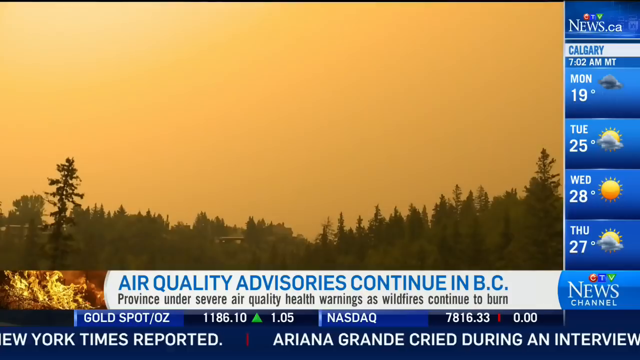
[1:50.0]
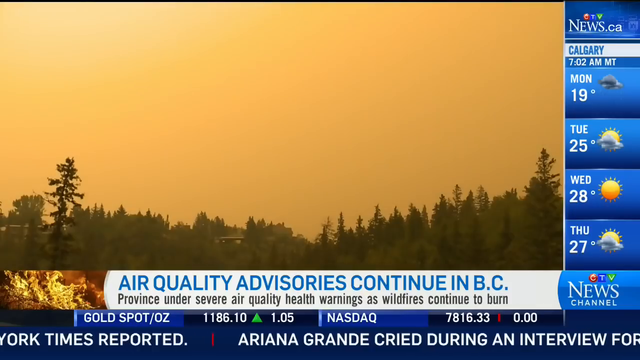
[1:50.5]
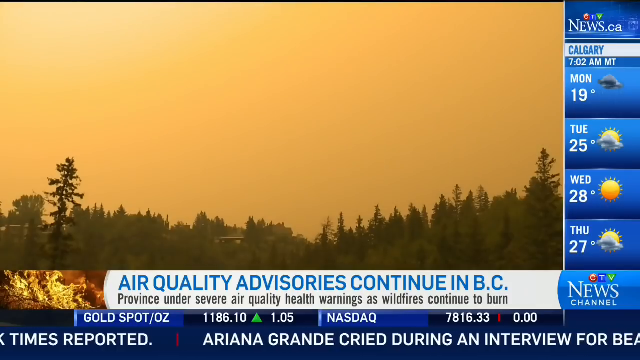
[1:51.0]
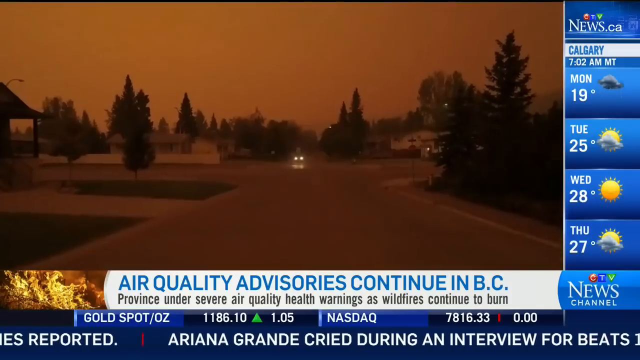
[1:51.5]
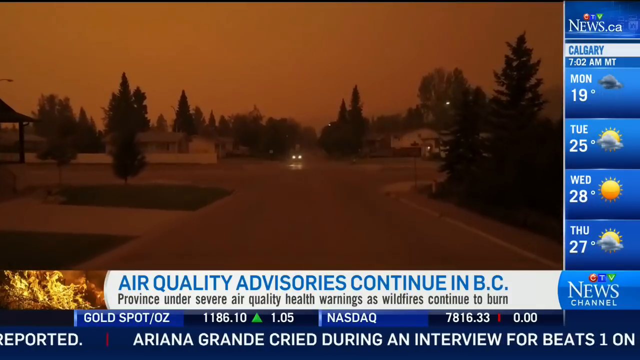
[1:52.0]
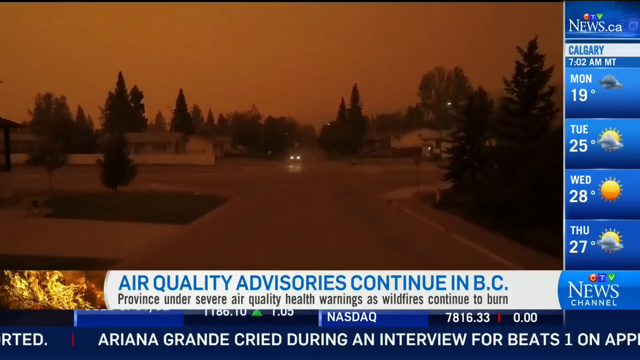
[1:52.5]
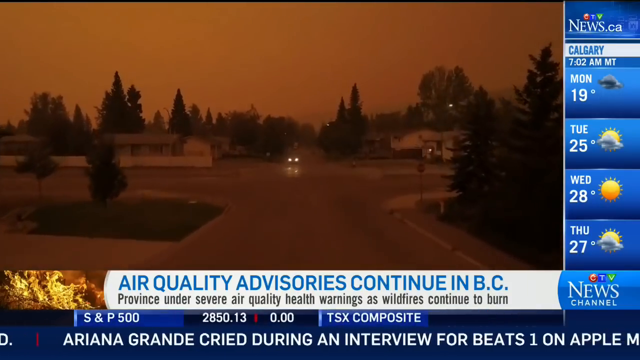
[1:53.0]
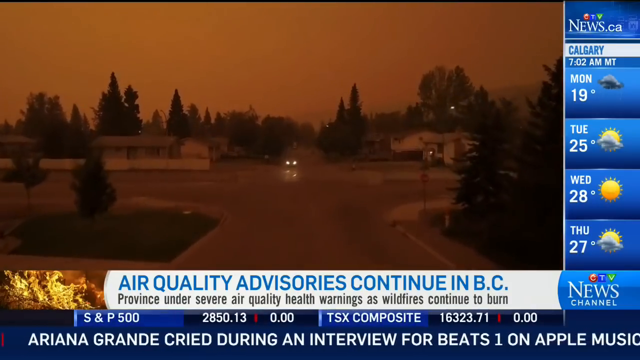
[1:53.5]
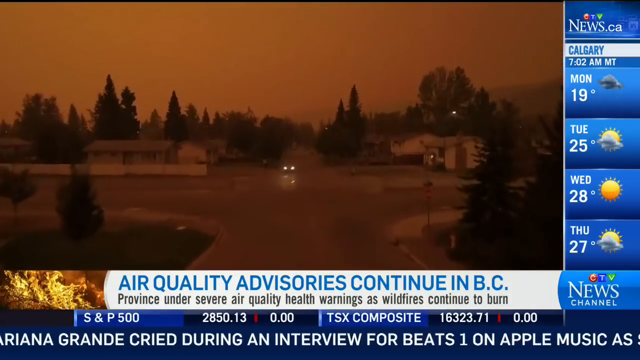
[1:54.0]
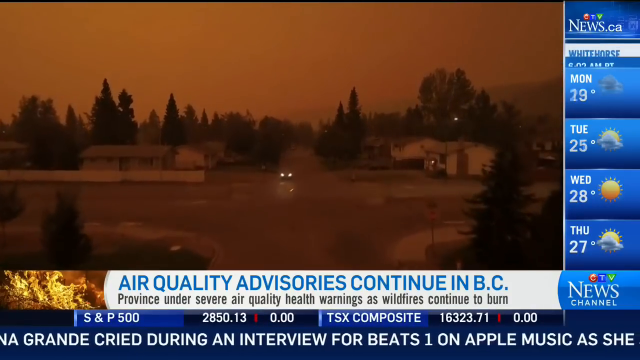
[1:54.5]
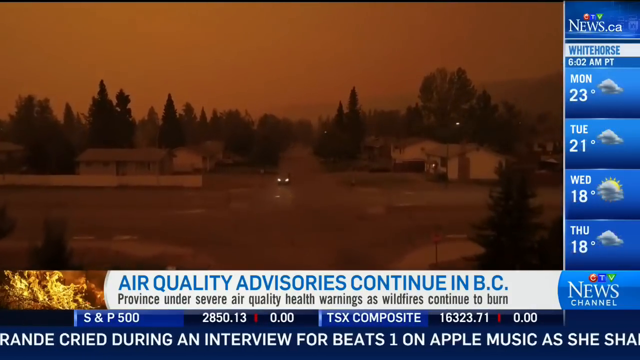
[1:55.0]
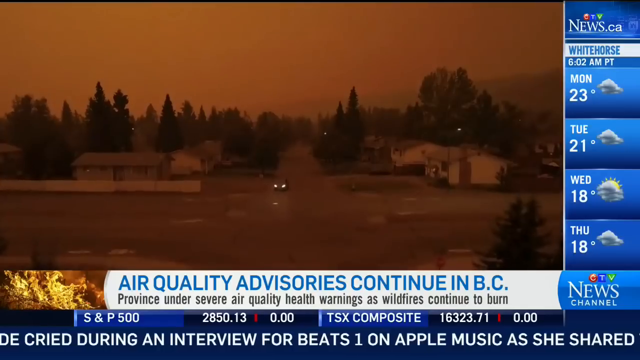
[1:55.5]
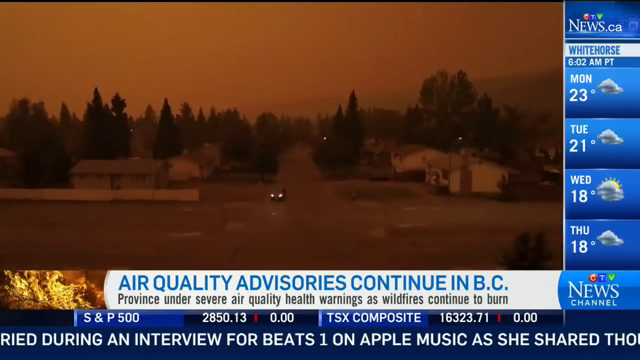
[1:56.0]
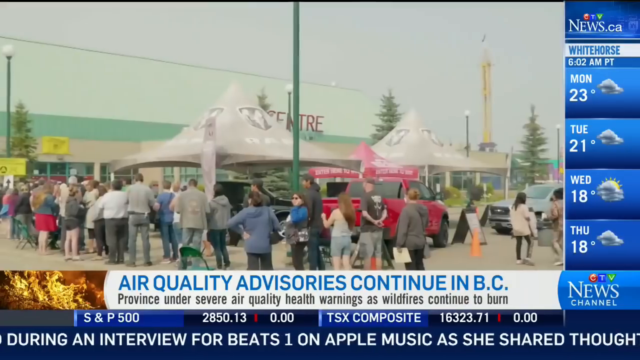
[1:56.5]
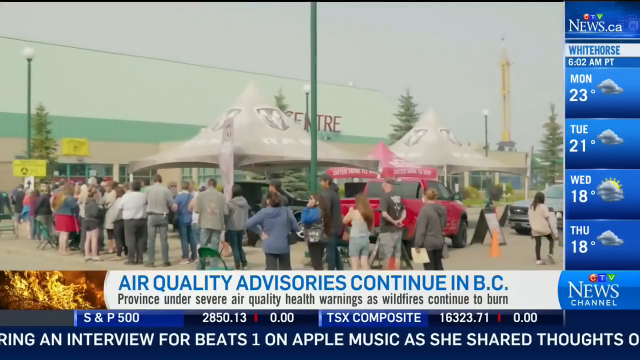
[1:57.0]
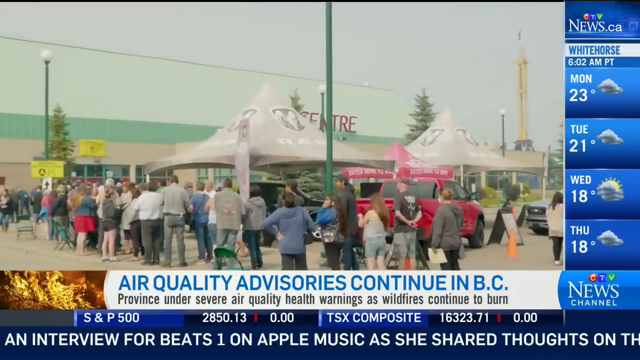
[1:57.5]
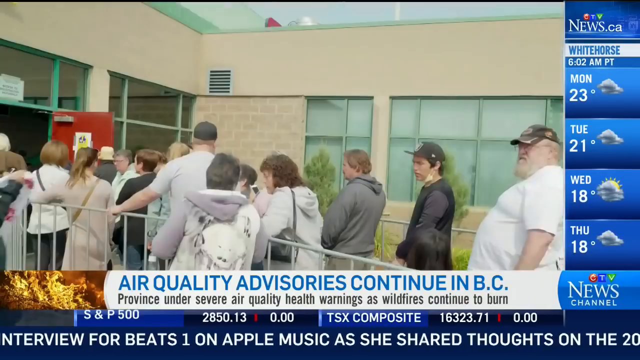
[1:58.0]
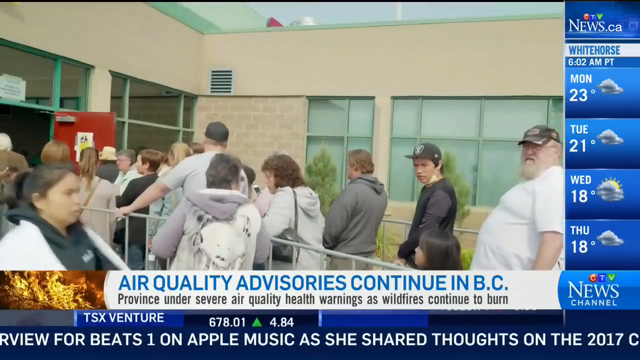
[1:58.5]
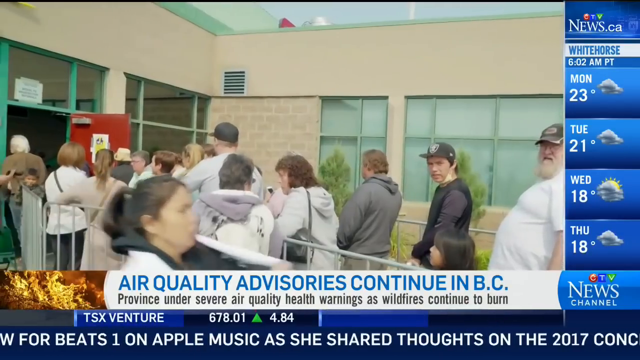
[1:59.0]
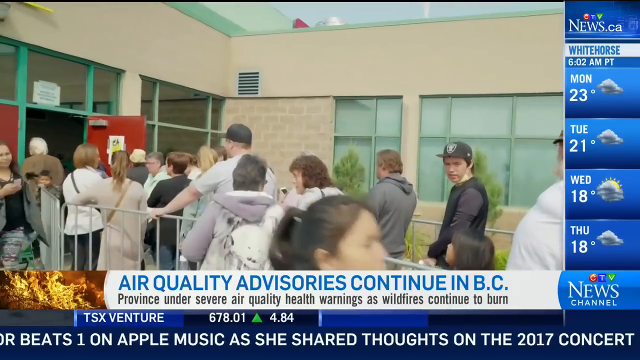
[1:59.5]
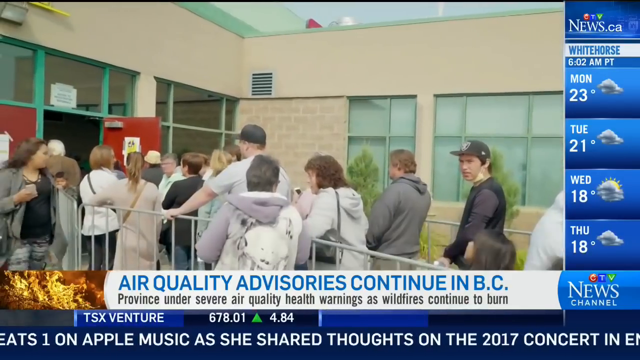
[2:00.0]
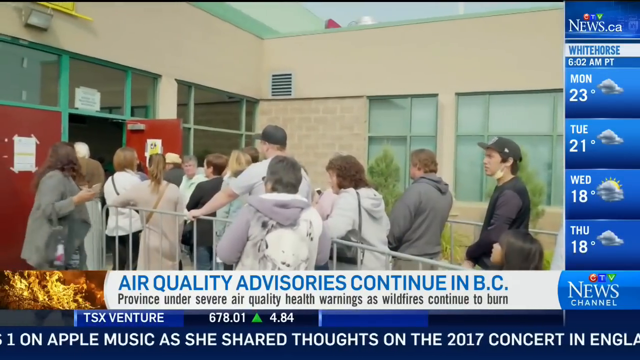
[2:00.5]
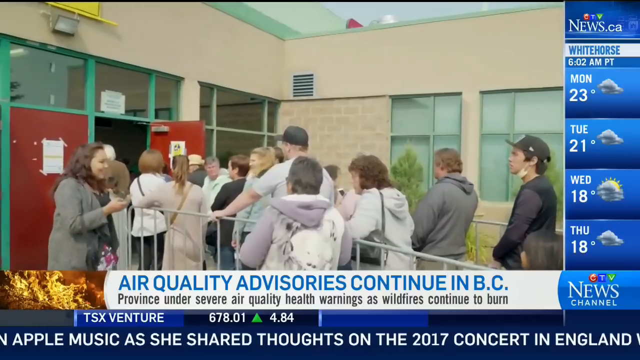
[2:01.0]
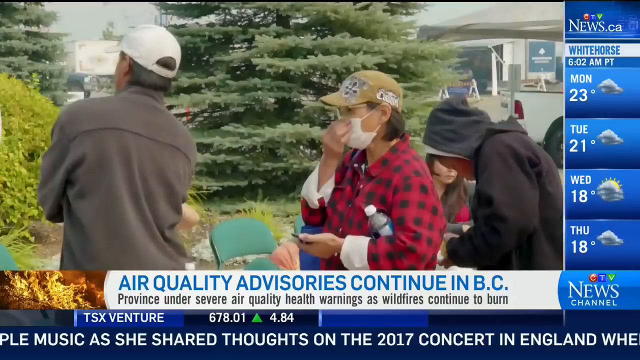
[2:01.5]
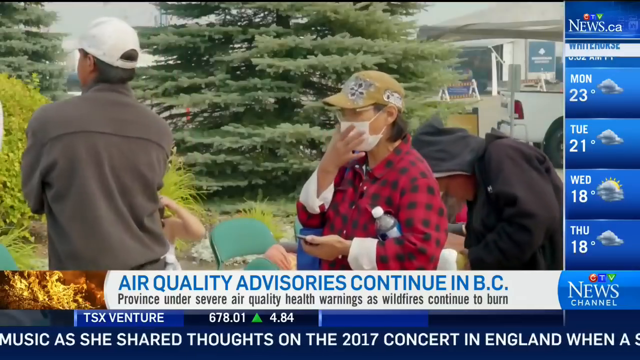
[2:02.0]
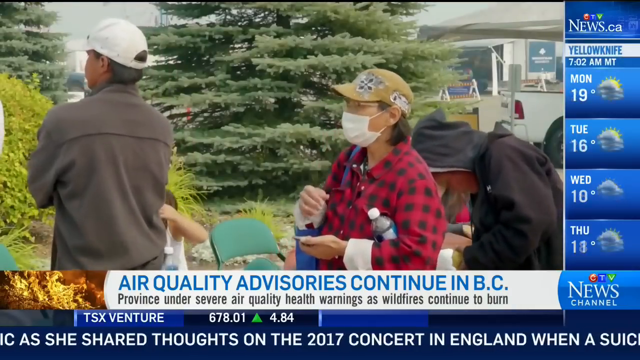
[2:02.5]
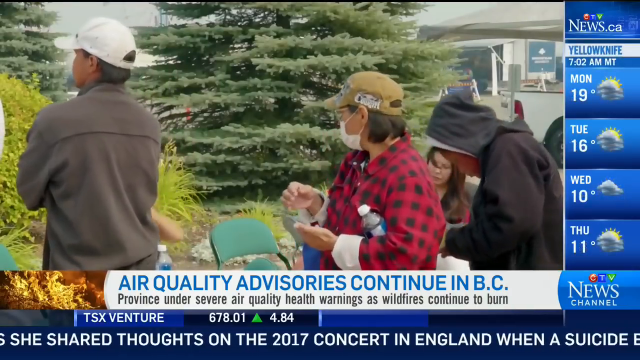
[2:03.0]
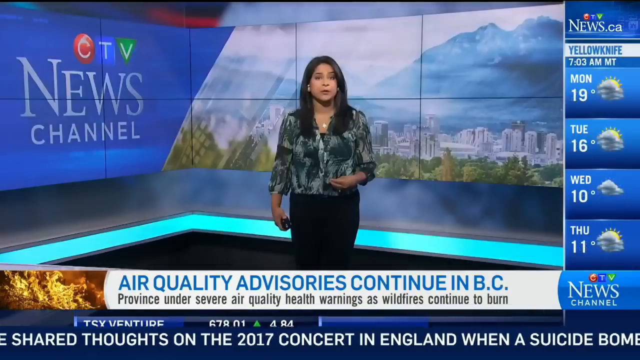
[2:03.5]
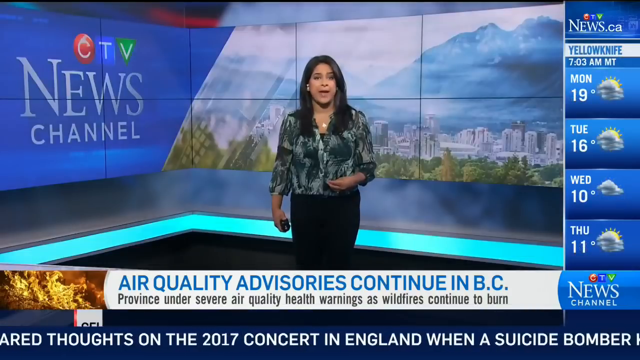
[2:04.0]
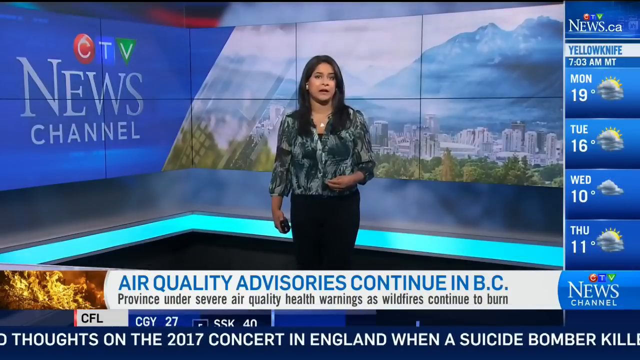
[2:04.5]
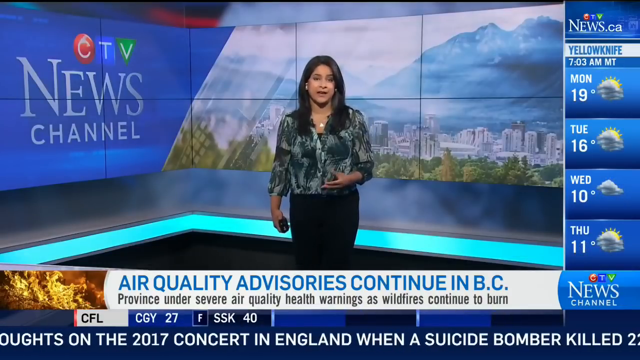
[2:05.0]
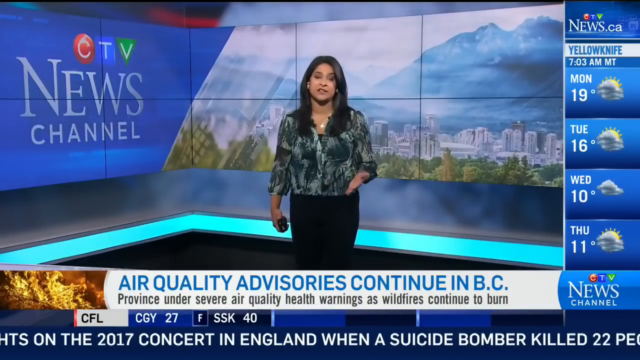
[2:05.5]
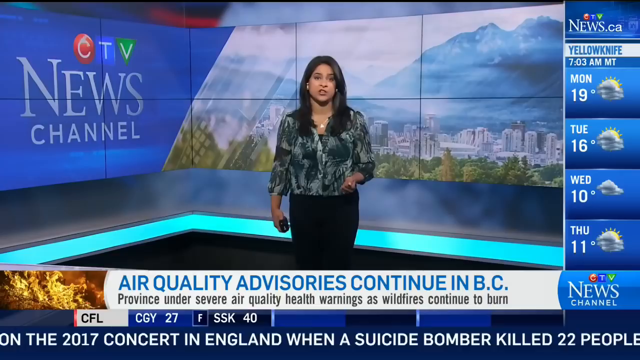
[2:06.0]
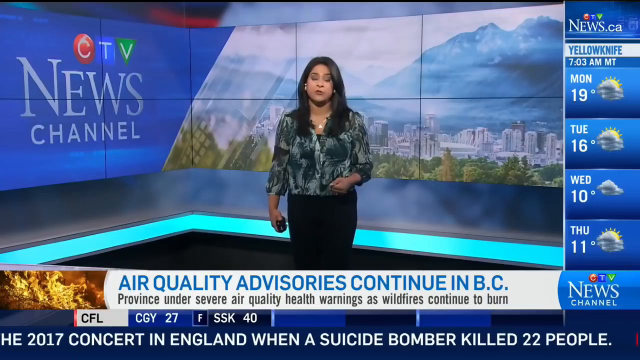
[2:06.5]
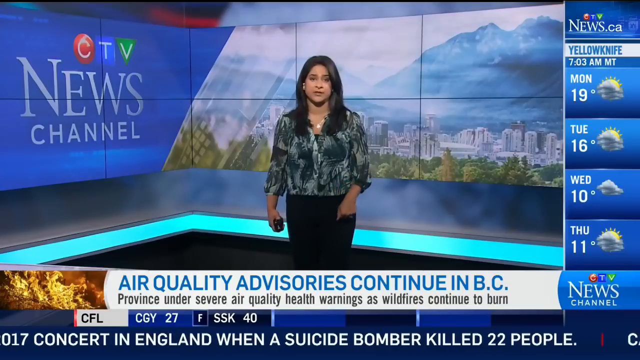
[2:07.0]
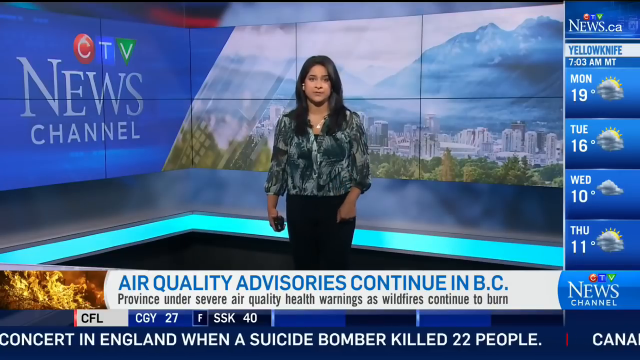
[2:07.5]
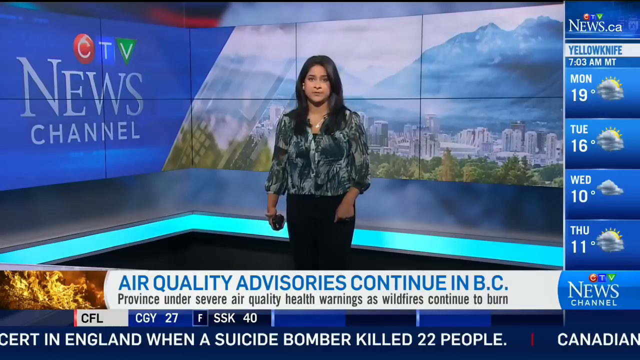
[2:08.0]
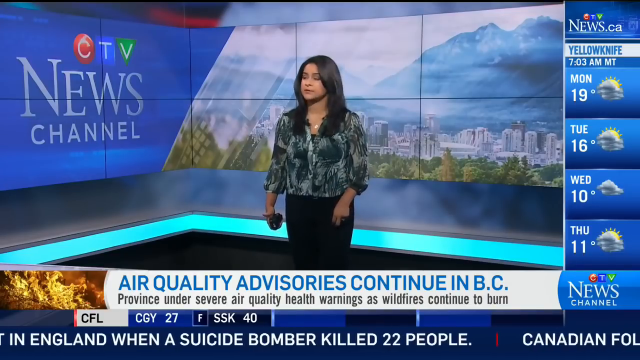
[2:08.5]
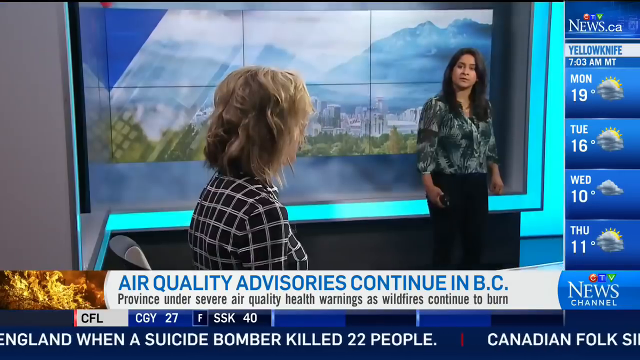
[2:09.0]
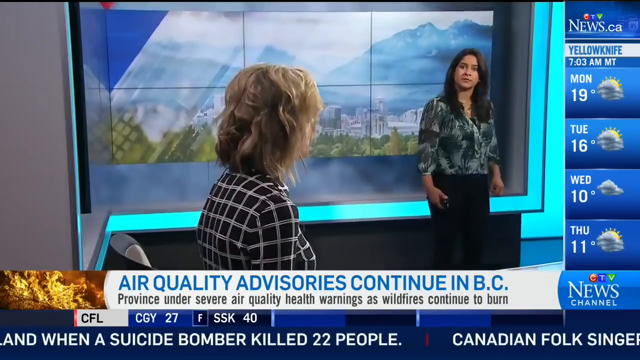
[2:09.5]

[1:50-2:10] The right side shows the weather for Calgary: Monday 19 degrees and cloudy, Tuesday 25 degrees and partly cloudy, Wednesday 28 degrees and sunny, Thursday 27 degrees and partly cloudy. The main view shows a closer view of a city covered in smoke, with vehicles travelling with their lights on. People stand in different lines at a centre, probably to get help, and some wear white face masks against the smoke. Then the presenters are shown inside the news room talking; one is seated and the other is standing, and they have a conversation, probably about the situation. At the bottom is a CFL League score: "CGY 27 - SSK 40".